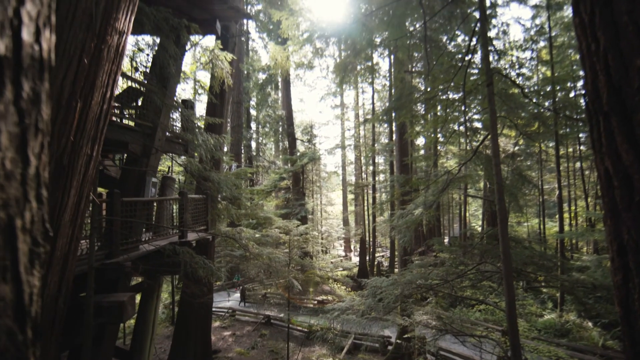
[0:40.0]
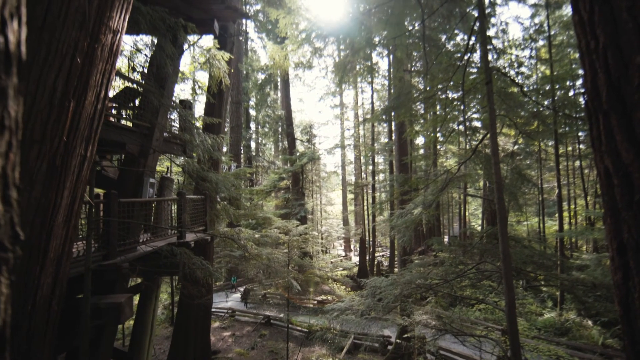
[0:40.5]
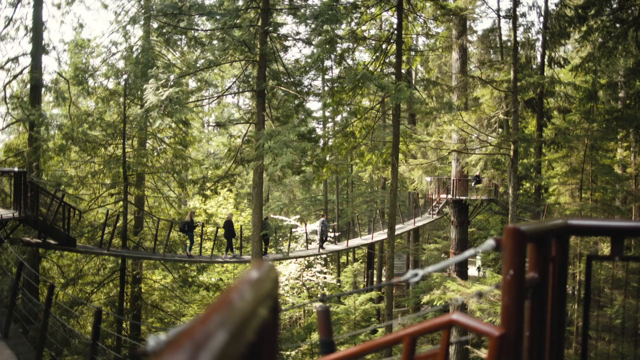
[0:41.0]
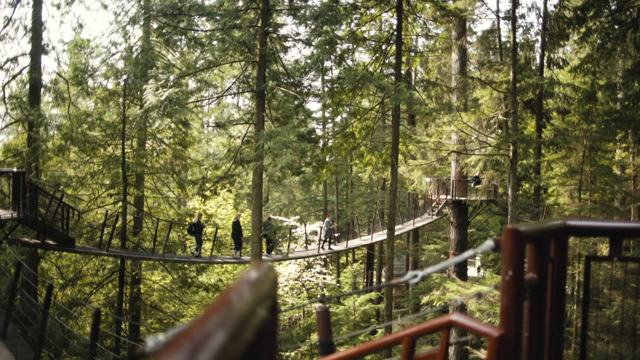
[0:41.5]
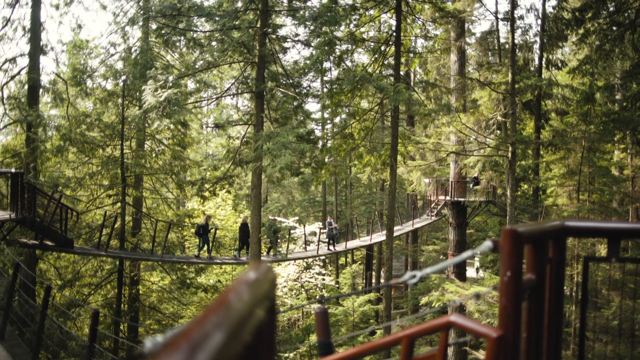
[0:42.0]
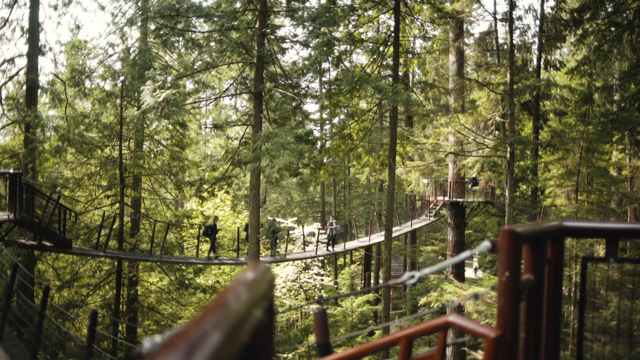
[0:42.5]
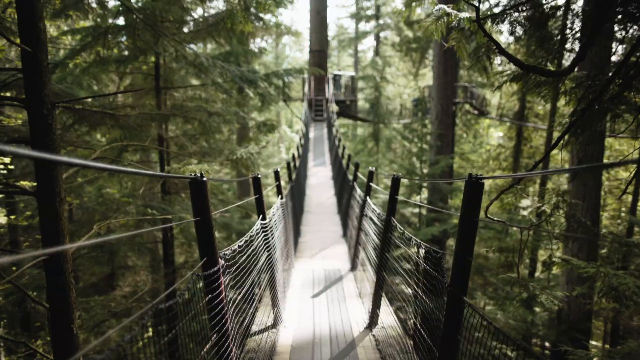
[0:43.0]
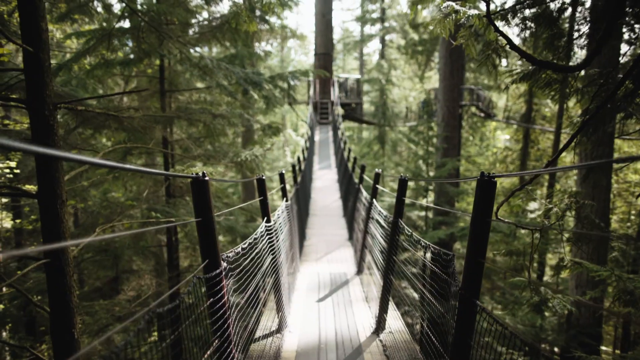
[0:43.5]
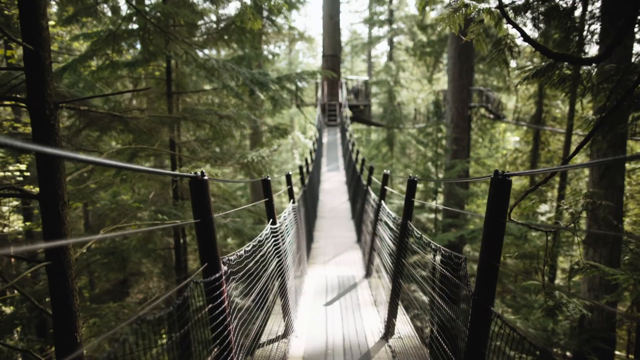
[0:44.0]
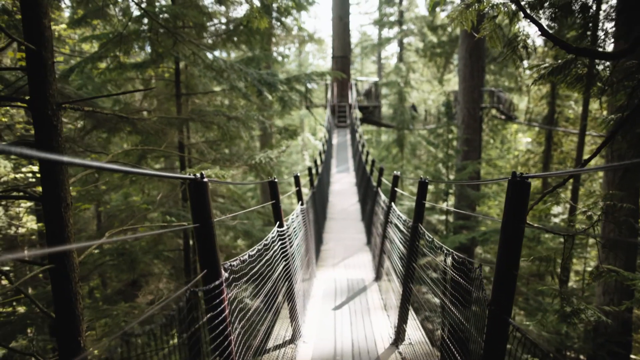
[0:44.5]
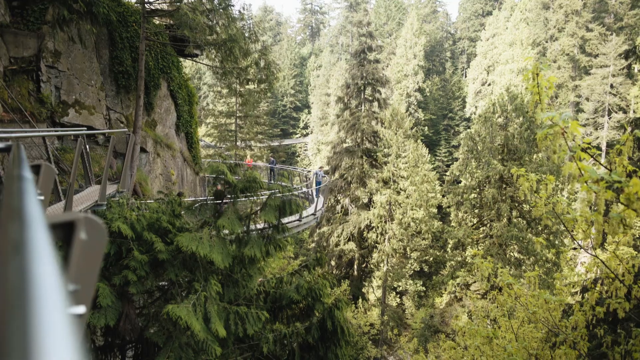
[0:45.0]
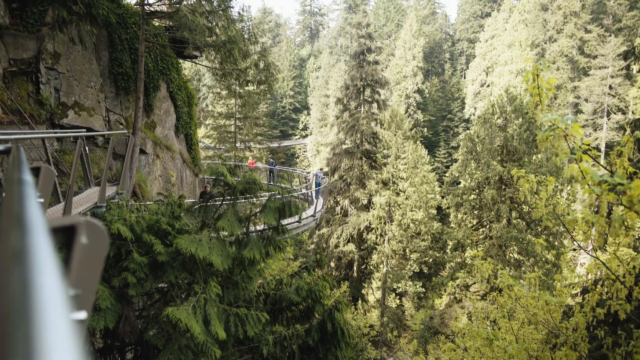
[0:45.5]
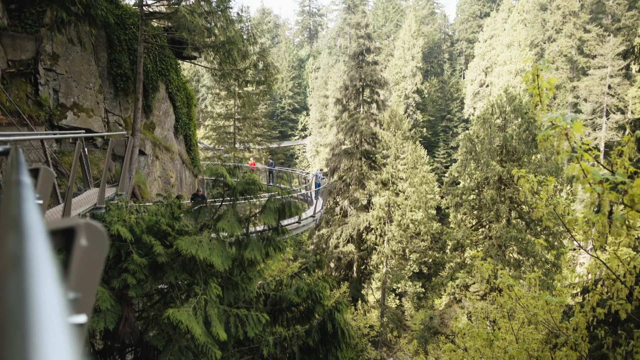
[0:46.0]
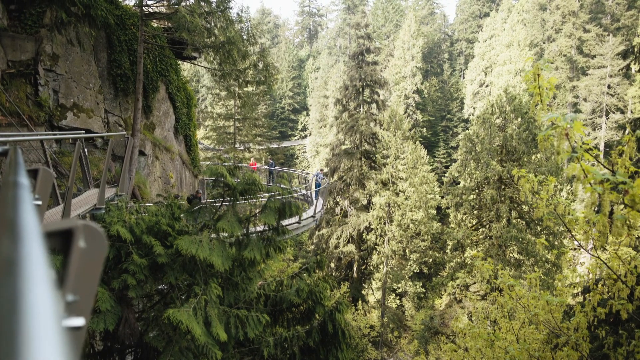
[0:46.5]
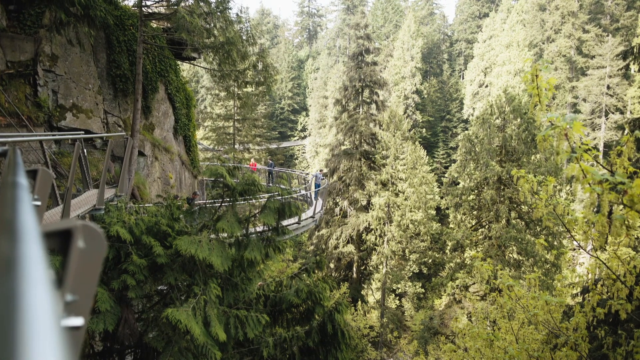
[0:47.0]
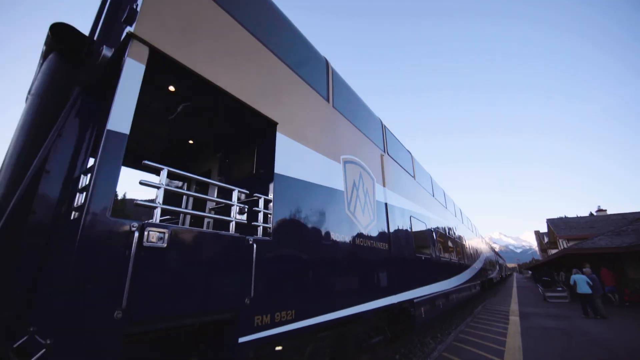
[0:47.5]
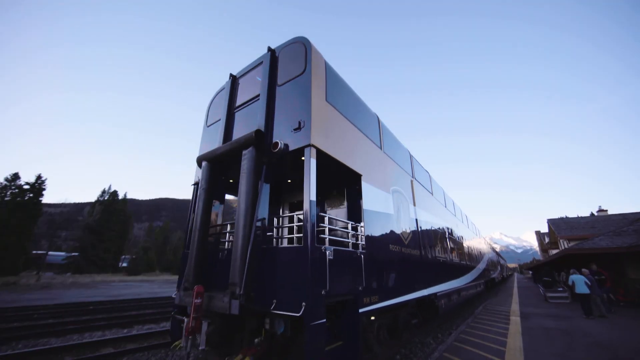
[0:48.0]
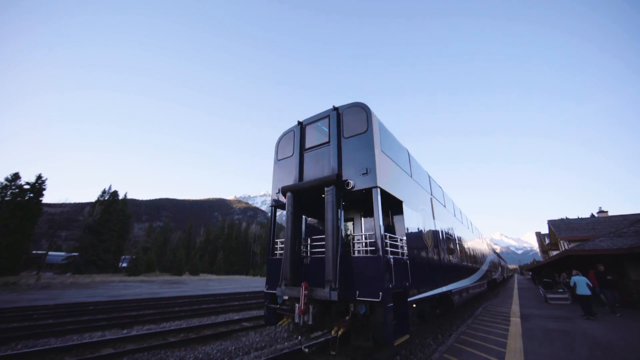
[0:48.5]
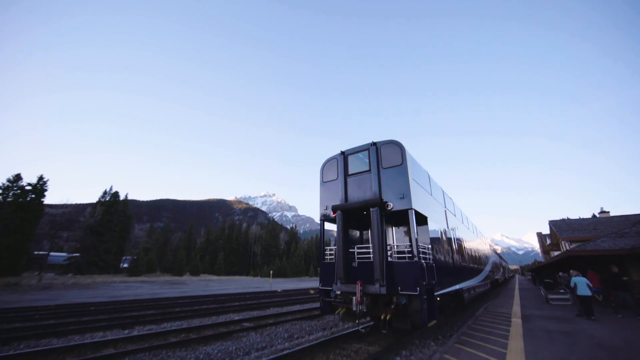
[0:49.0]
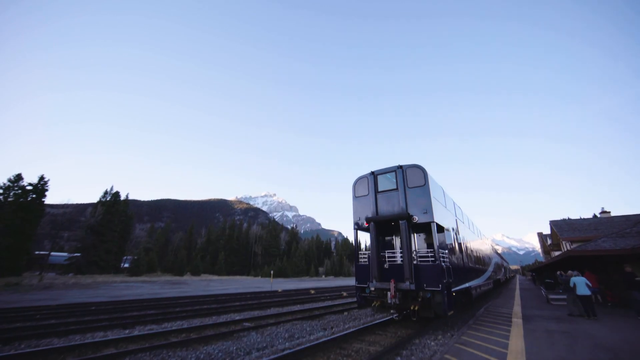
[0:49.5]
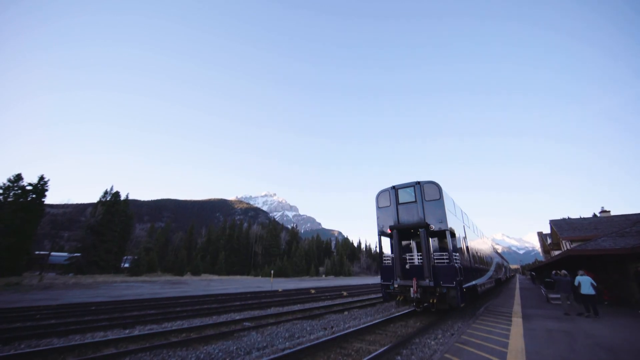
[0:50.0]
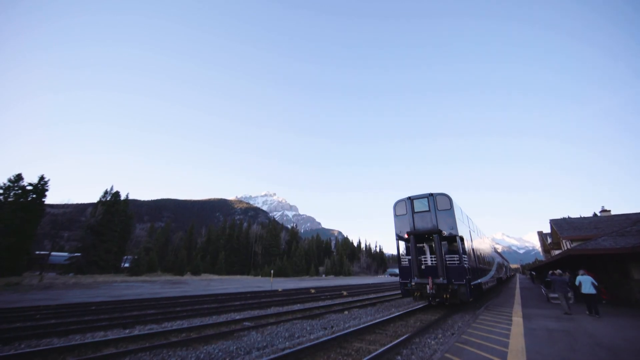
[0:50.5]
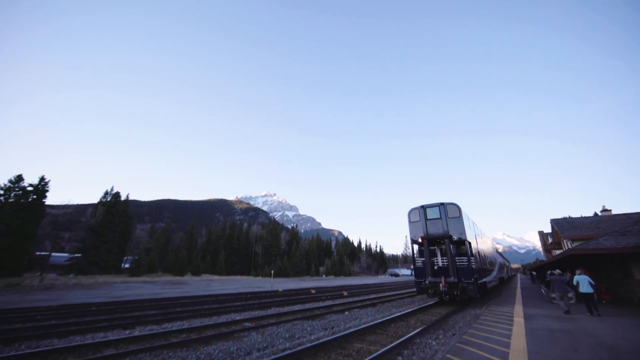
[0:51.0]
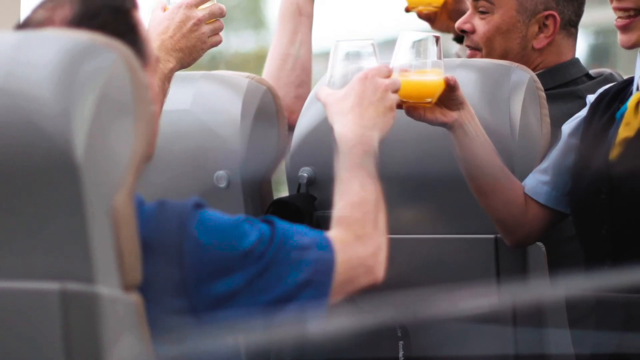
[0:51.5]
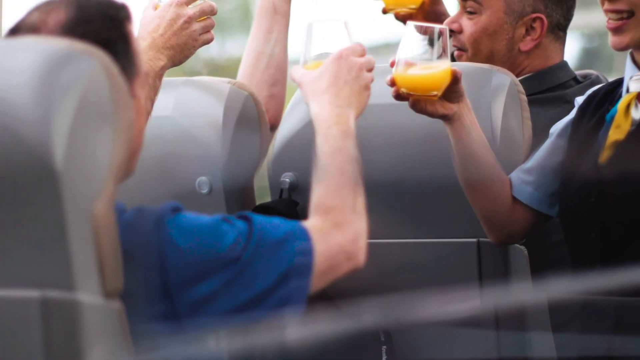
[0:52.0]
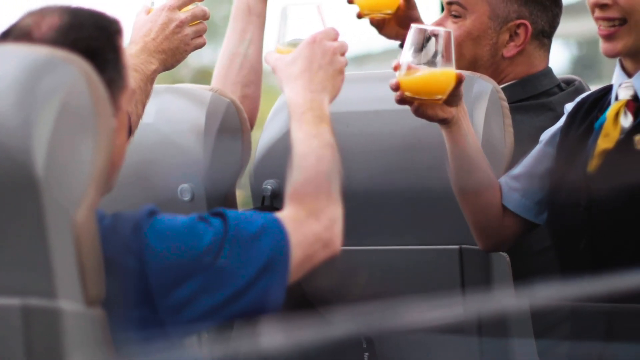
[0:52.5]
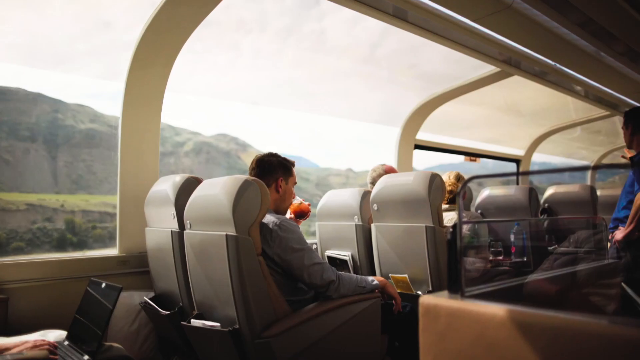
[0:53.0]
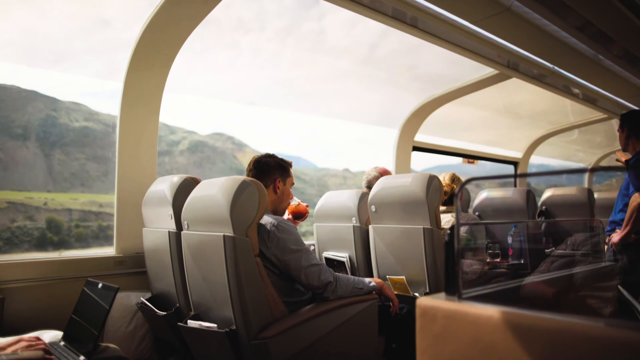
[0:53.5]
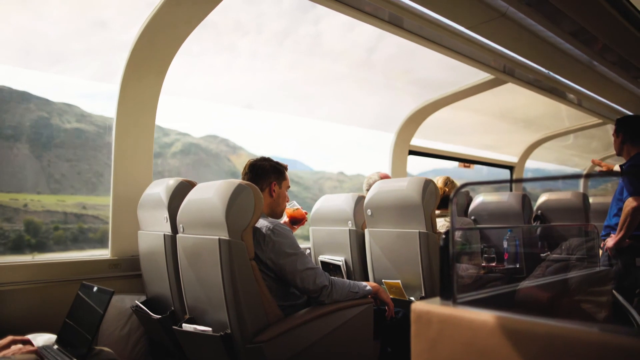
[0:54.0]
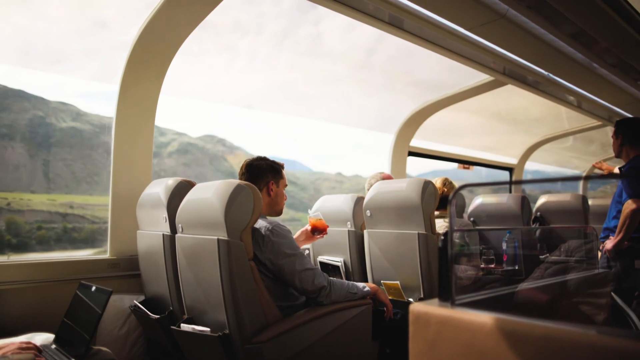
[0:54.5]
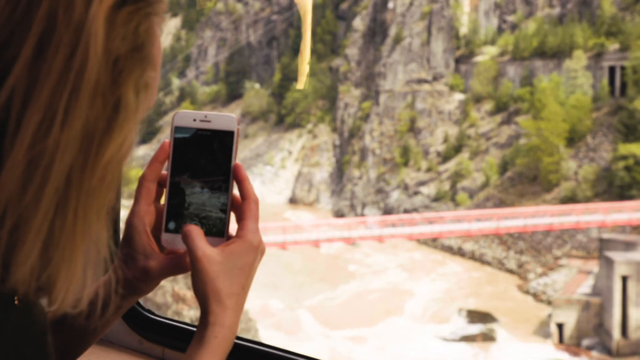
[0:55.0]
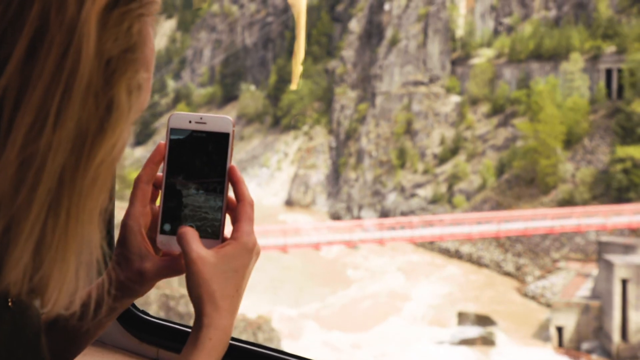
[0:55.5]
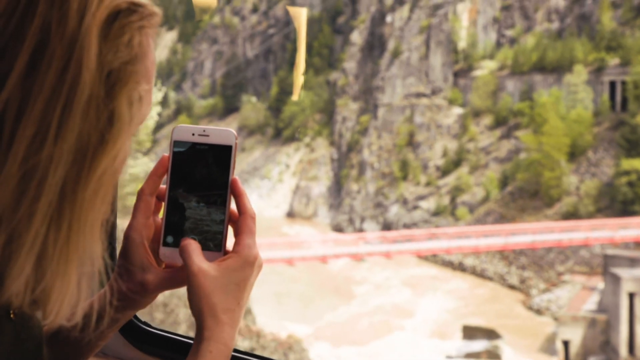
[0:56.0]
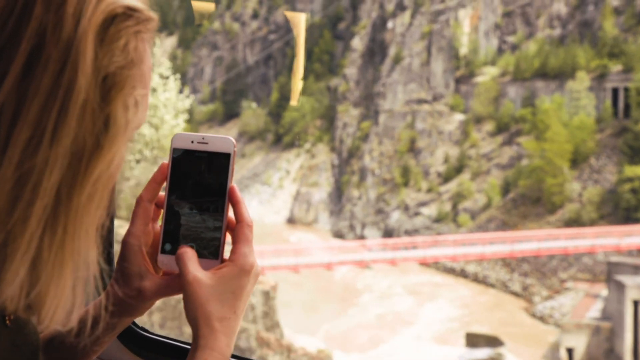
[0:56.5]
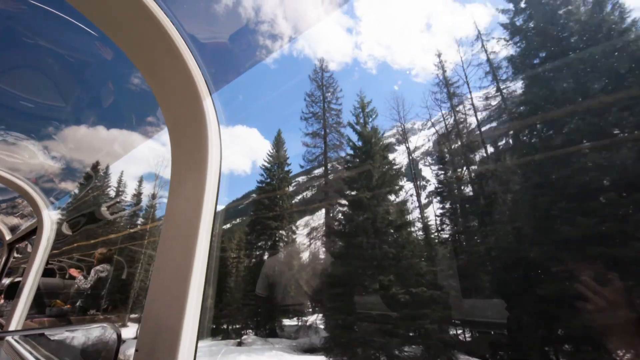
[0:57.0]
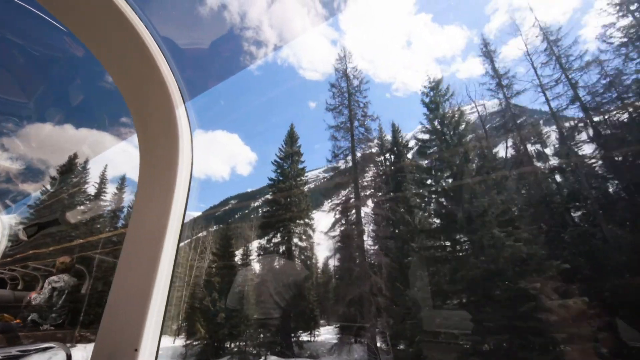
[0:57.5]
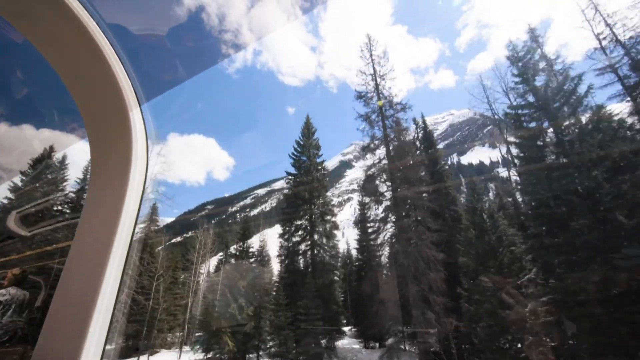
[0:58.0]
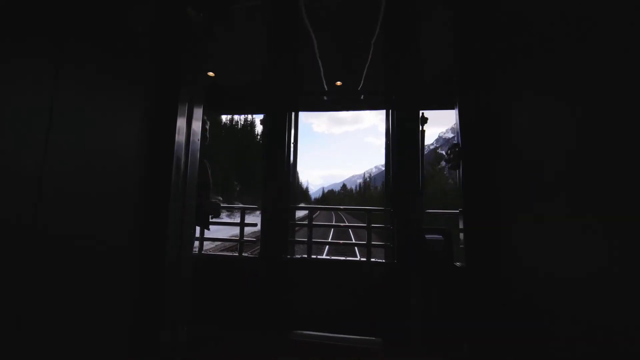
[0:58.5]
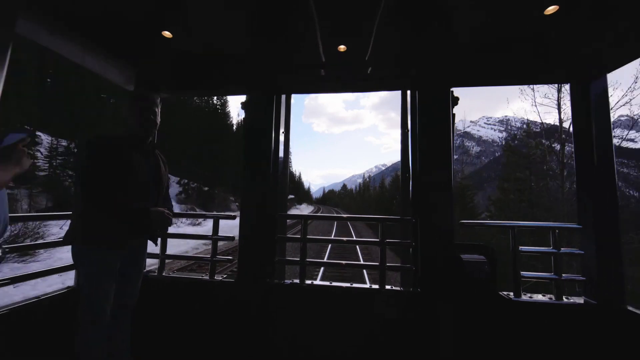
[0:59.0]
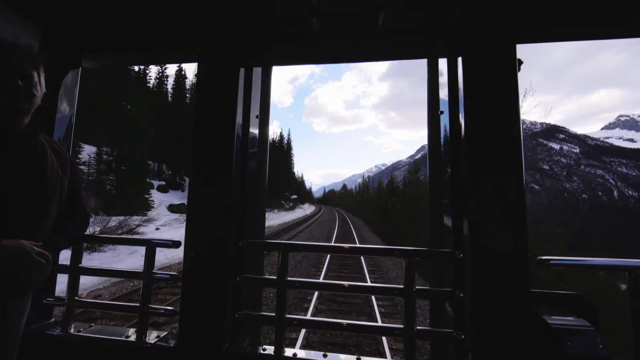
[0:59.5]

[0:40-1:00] In what looks like woods, really tall, skinny evergreen trees stand with some sunlight peeking through. A different shot from farther away looks at a suspended bridge that sort of sags in the middle like a smiley face, with people walking across it, still in the forest with tall evergreens; the people are probably at least 20 feet above the ground. From a different angle, the camera person is on the bridge, looking straight ahead down the bridge. Another shot shows a similar environment with towering evergreen trees, probably hundreds of feet tall. On the left is a silver, rounded, somewhat wraparound structure that looks like a walkway built into the side of a mountain, with a couple of people who appear to be walking on it.